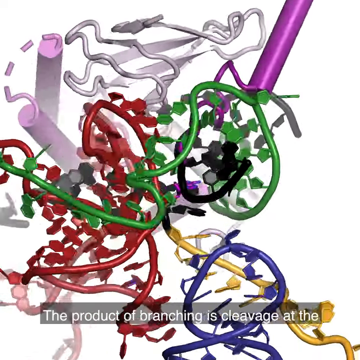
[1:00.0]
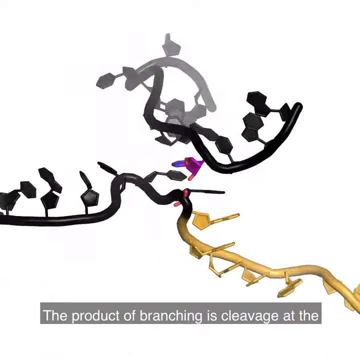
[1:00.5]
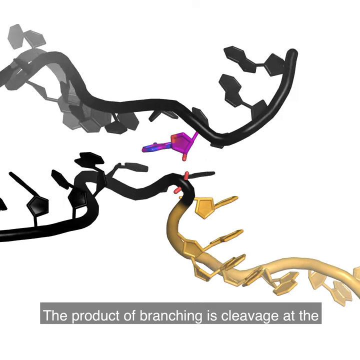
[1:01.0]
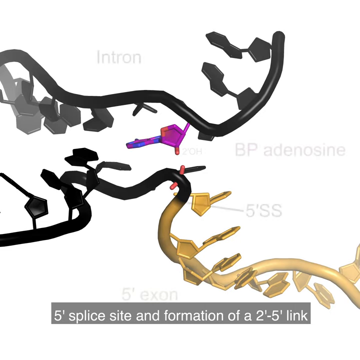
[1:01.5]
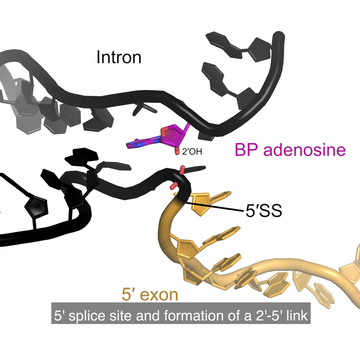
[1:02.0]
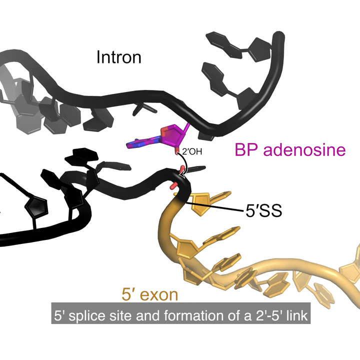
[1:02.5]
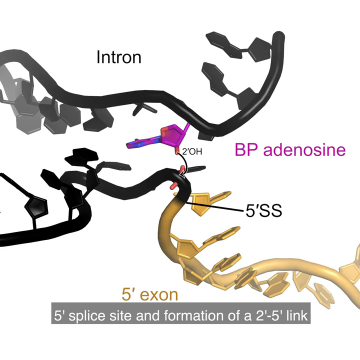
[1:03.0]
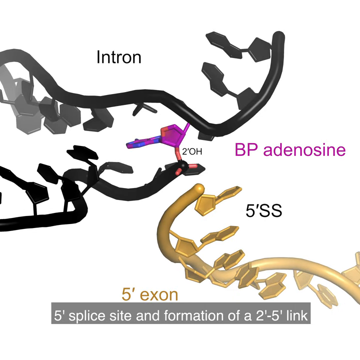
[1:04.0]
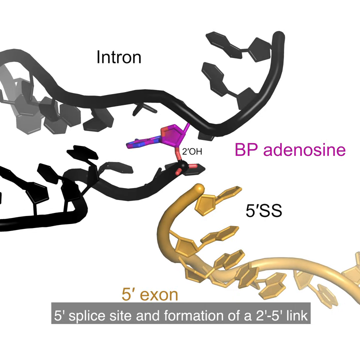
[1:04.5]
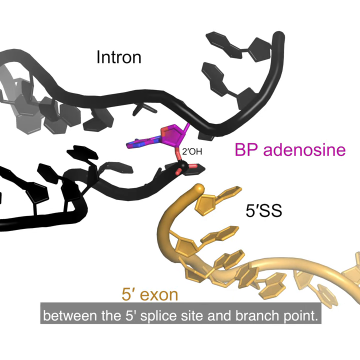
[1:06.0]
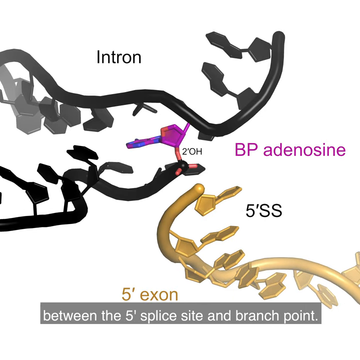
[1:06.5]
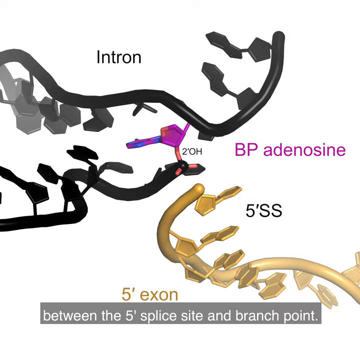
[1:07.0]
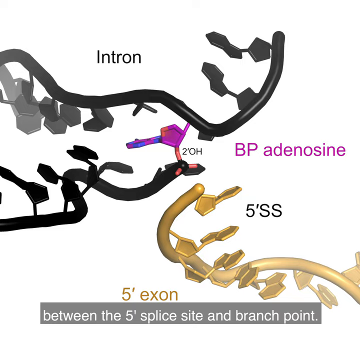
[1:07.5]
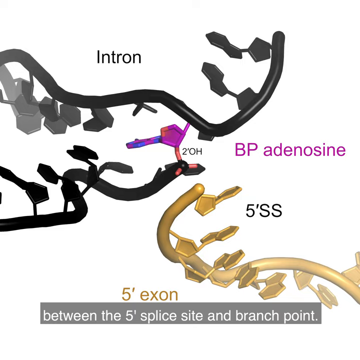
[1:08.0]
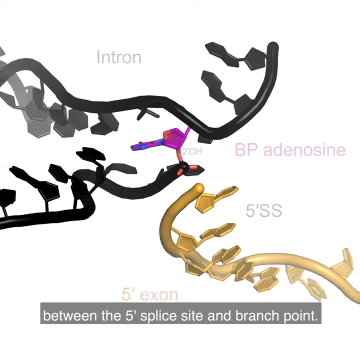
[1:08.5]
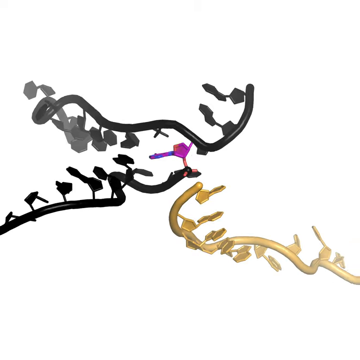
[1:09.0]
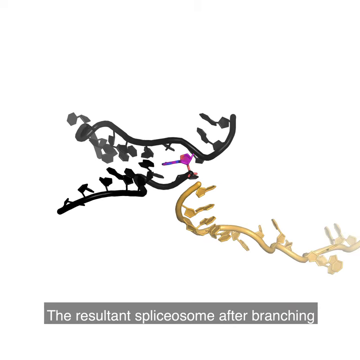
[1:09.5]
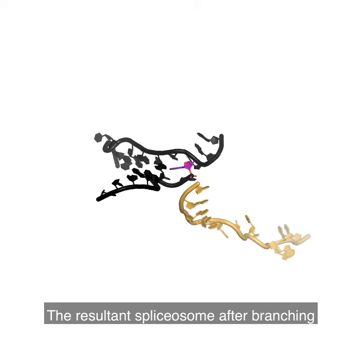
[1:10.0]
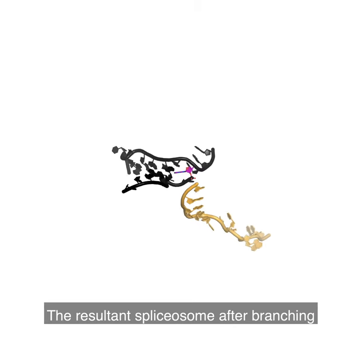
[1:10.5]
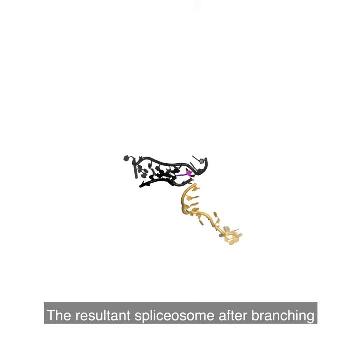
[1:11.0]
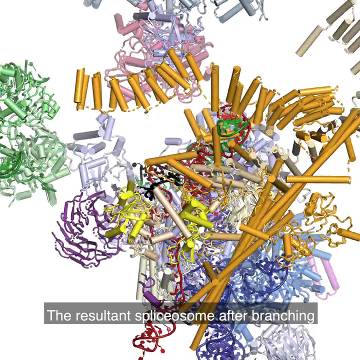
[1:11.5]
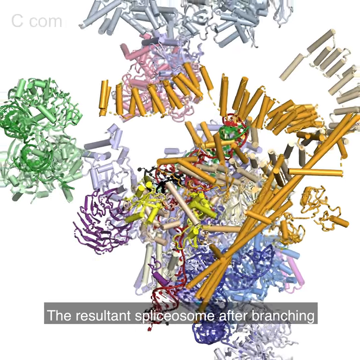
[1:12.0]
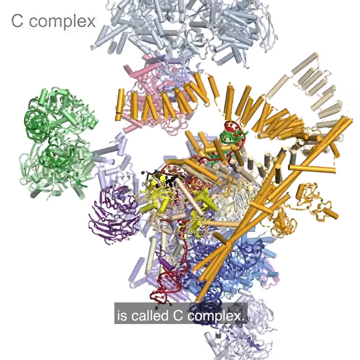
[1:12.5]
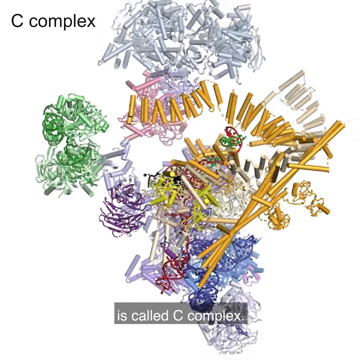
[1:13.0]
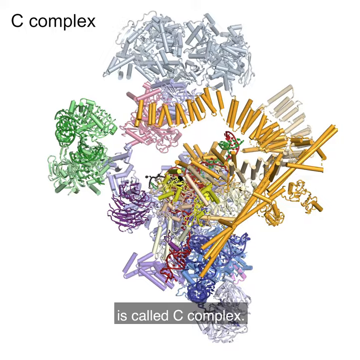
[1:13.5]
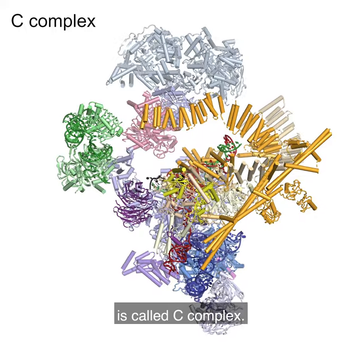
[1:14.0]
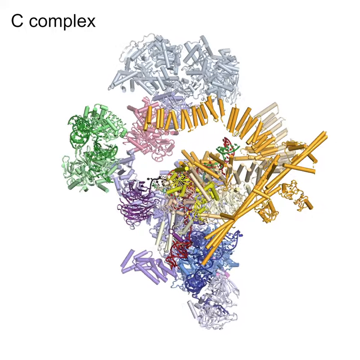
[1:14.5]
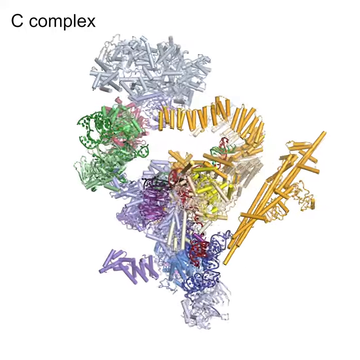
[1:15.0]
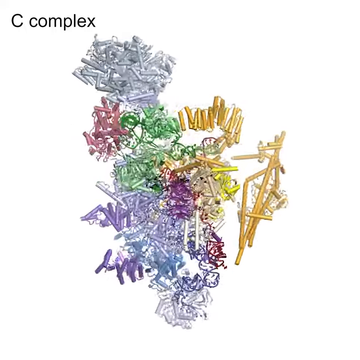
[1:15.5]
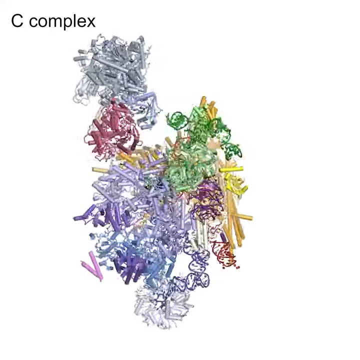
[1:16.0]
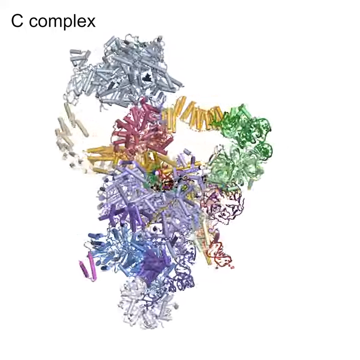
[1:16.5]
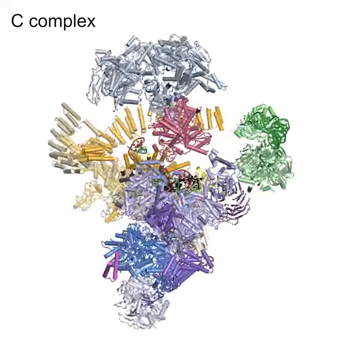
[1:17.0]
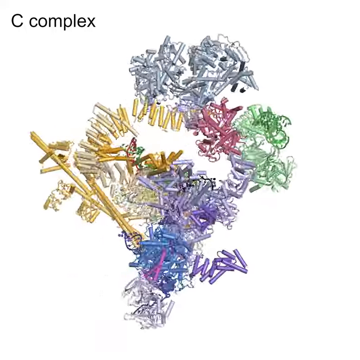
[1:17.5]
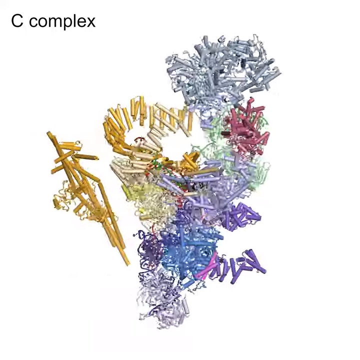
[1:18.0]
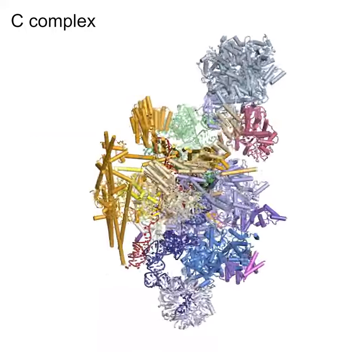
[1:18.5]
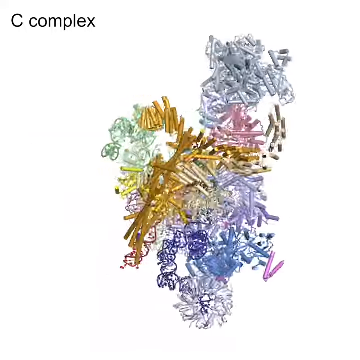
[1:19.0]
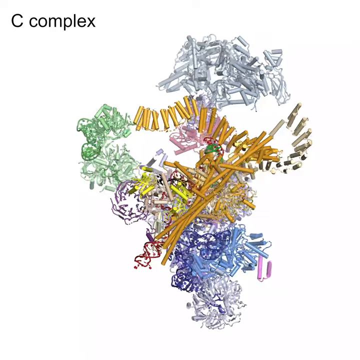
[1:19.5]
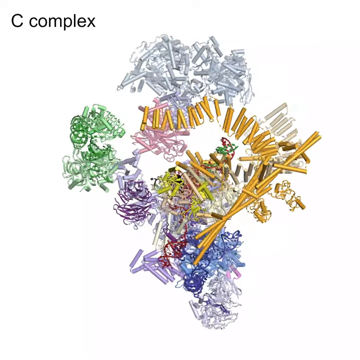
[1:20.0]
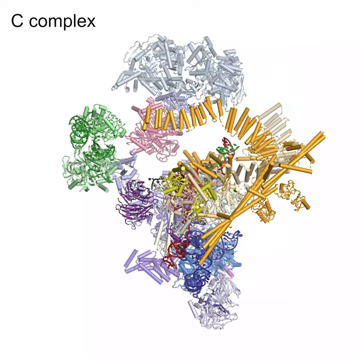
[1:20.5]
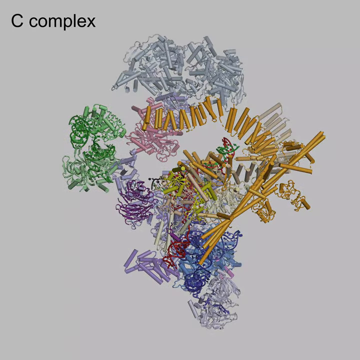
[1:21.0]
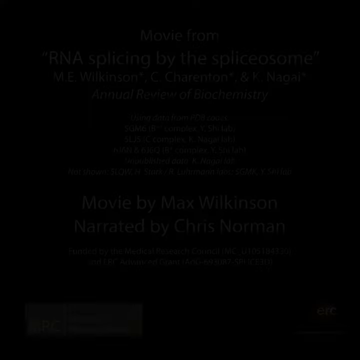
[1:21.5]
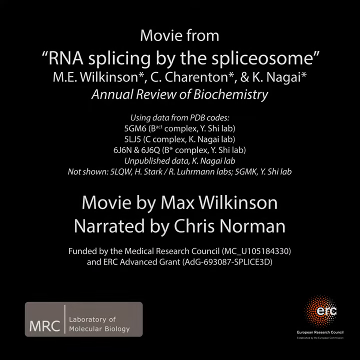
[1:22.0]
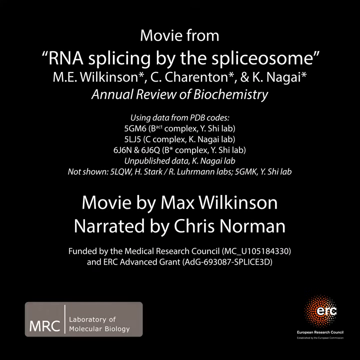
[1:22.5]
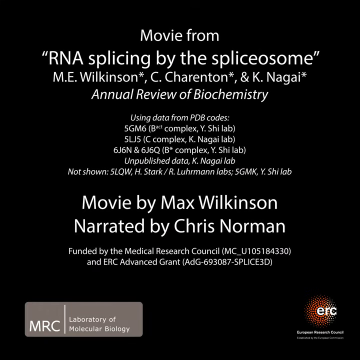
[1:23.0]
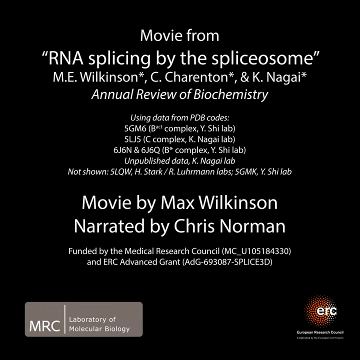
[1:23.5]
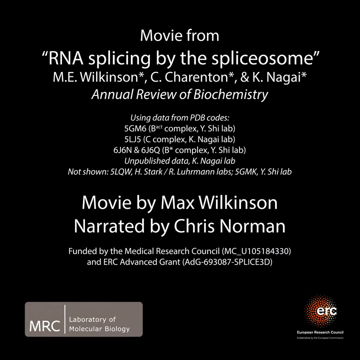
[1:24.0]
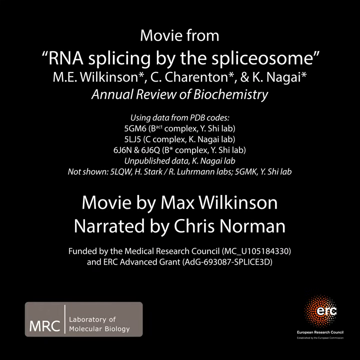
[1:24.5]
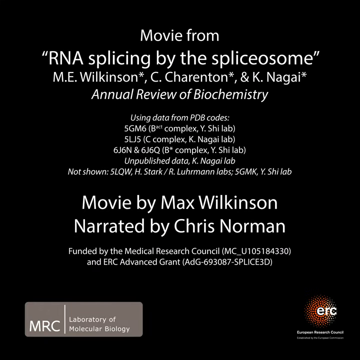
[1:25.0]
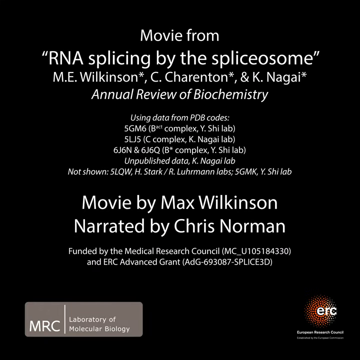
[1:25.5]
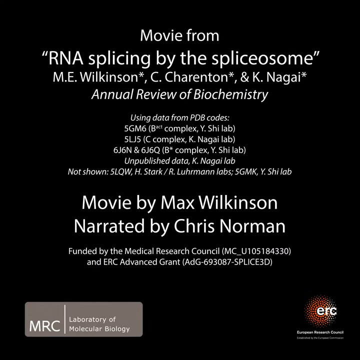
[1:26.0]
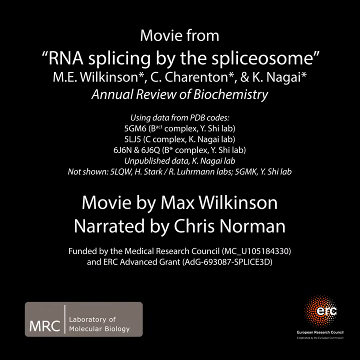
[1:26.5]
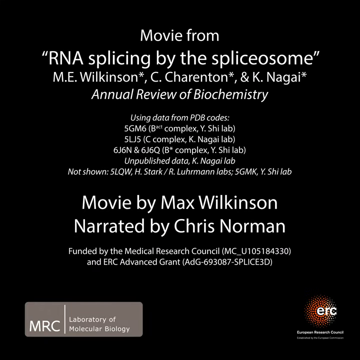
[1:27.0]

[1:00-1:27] An animated illustration shows a complex chemical structure that looks like an organic or biological structure, in grey, green, black, red, yellow and blue, resembling little tubes or pipes interconnected with tangling strand-like substances. Text at the bottom of the screen describes what is happening in the animation. A close-up view shows two strands that look like unravelled DNA strands, in black and gold, with a purple structure attached to one of them; the purple attachment is labelled "BP adenosine". The camera zooms out again to show the entire structure. At the end, white text appears against a black background, reading from the top downwards "movie from RNA splicing by the spliceosome", followed by the names of the authors and the name of the scientific paper.